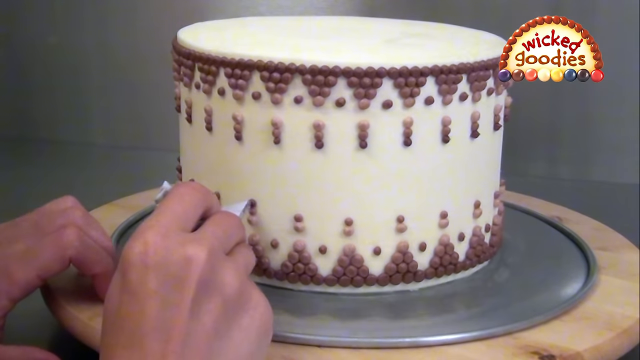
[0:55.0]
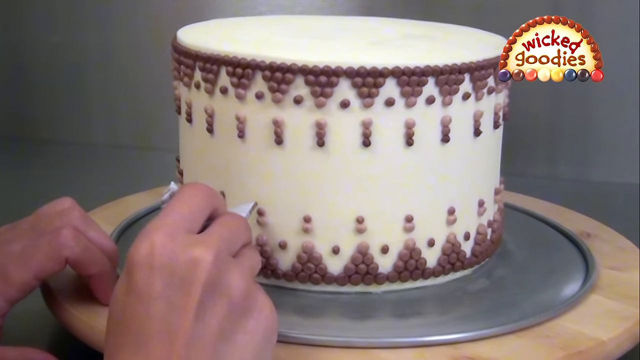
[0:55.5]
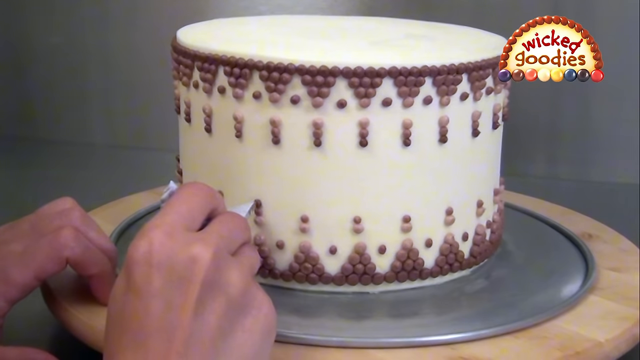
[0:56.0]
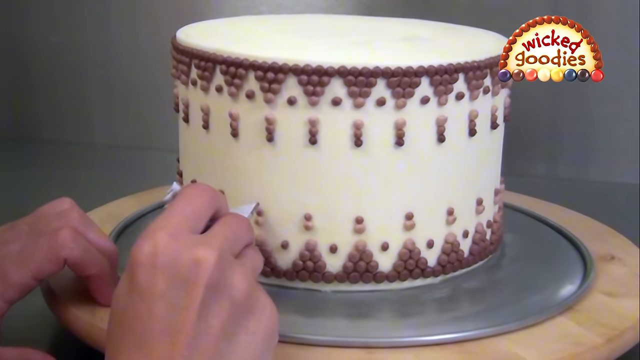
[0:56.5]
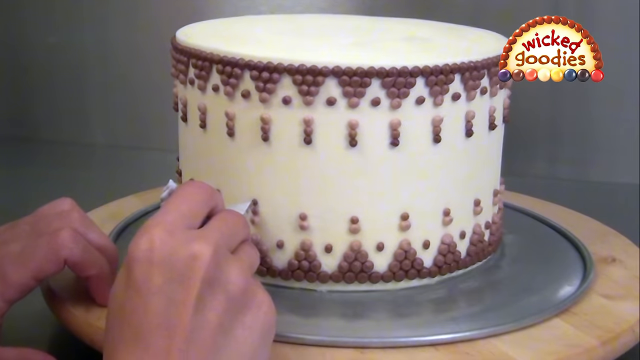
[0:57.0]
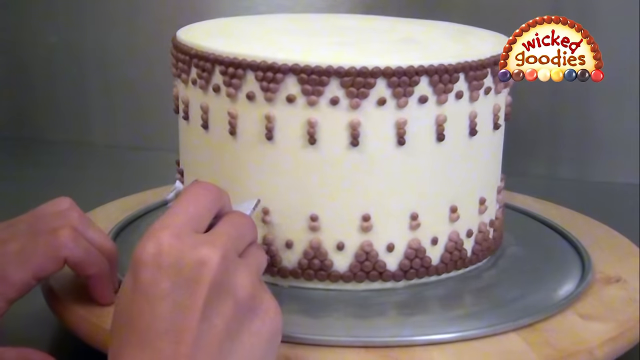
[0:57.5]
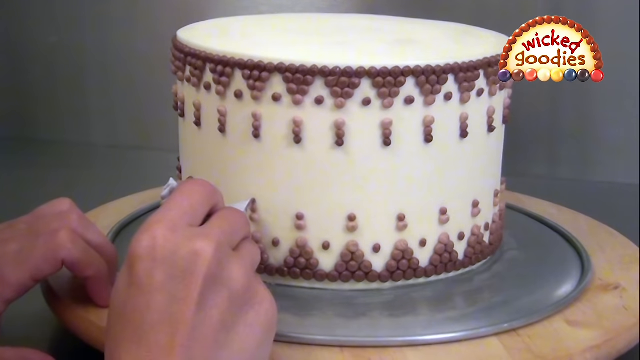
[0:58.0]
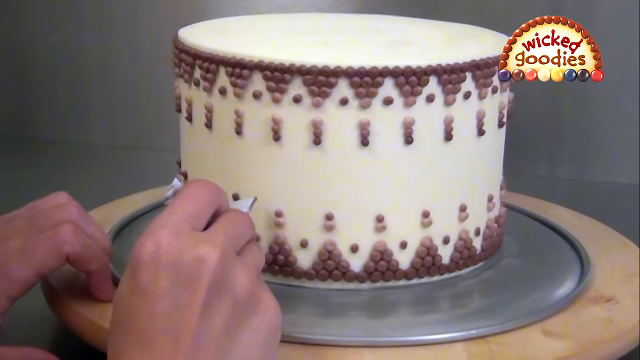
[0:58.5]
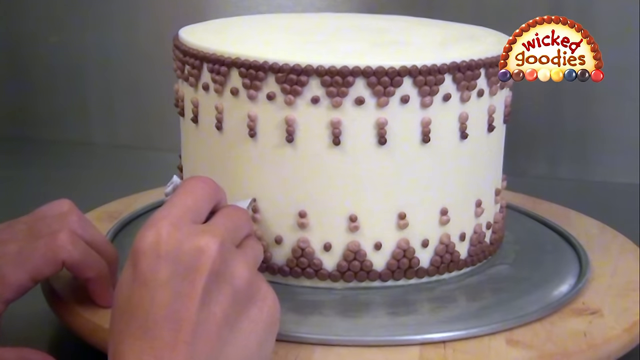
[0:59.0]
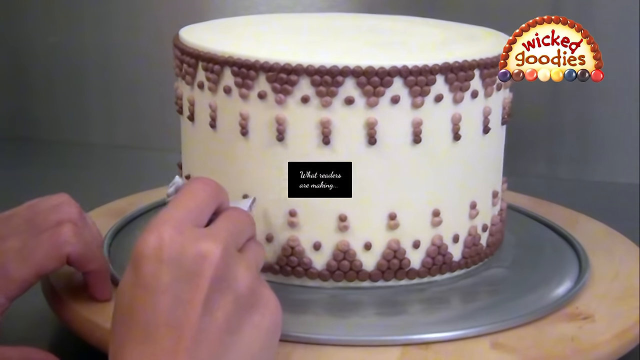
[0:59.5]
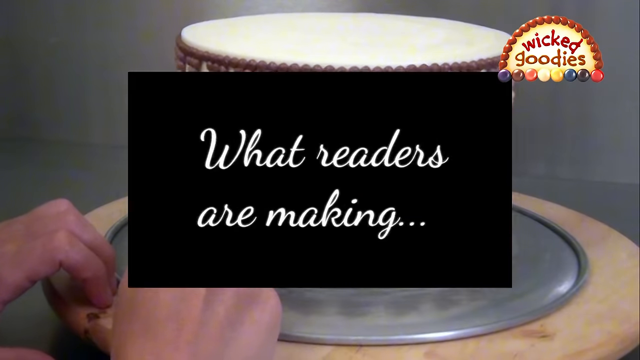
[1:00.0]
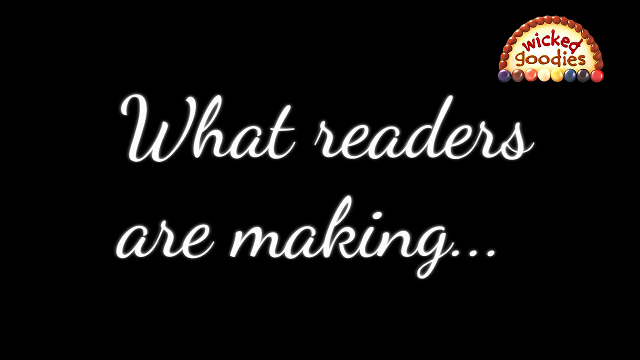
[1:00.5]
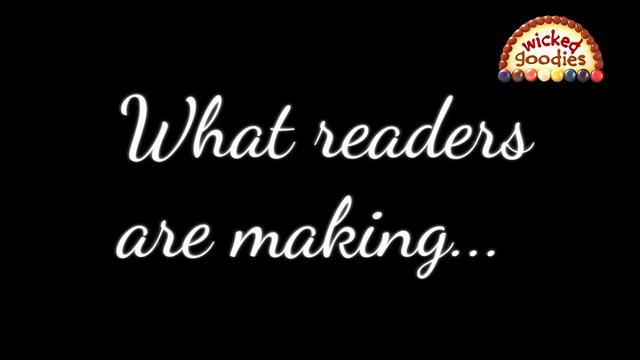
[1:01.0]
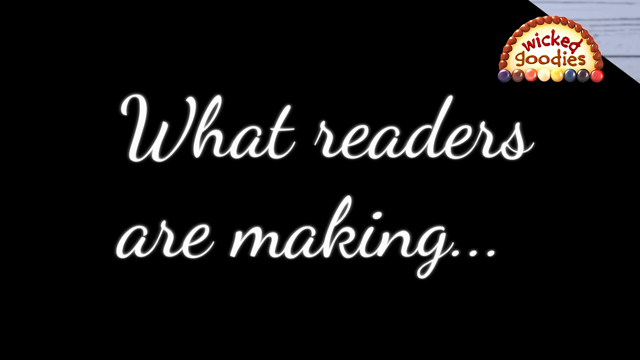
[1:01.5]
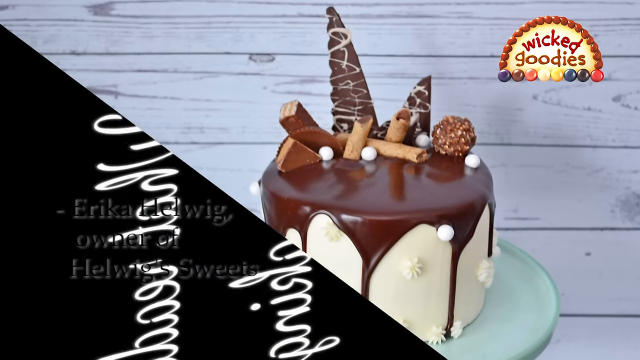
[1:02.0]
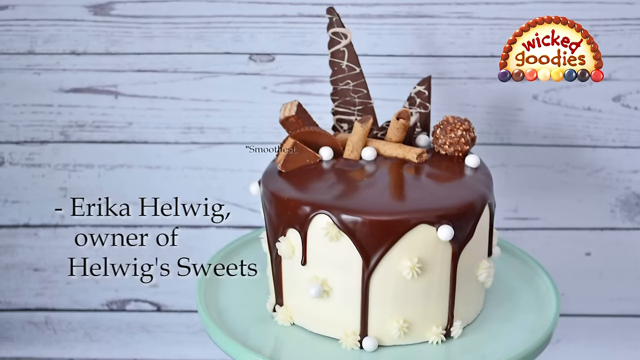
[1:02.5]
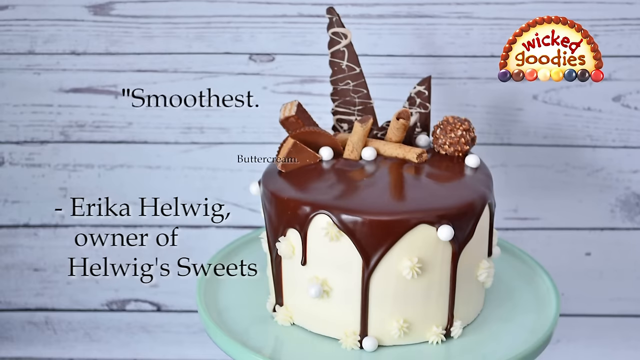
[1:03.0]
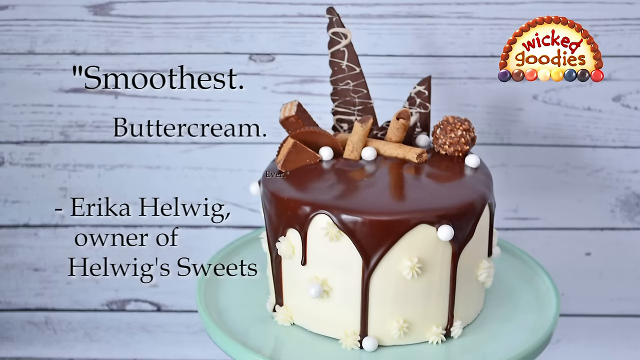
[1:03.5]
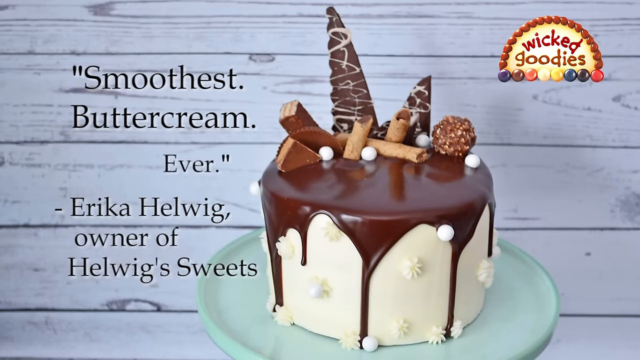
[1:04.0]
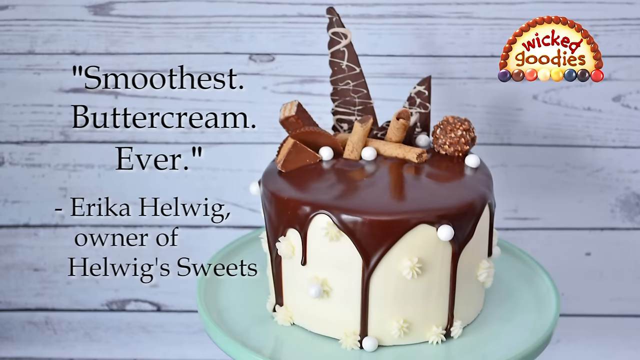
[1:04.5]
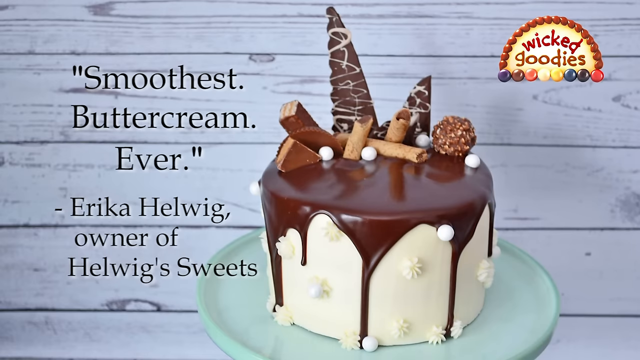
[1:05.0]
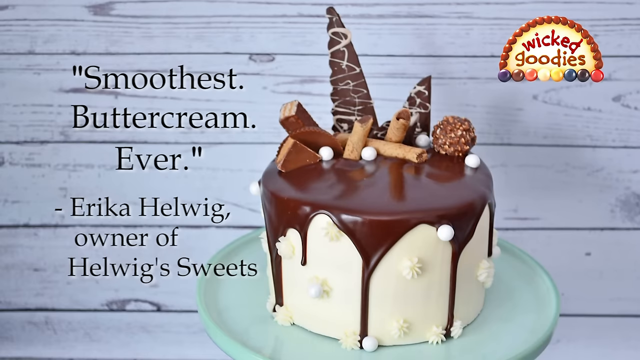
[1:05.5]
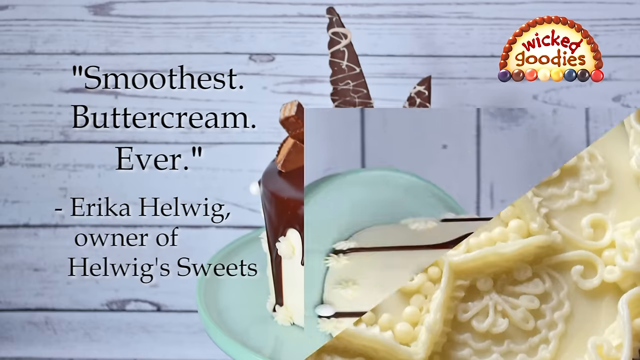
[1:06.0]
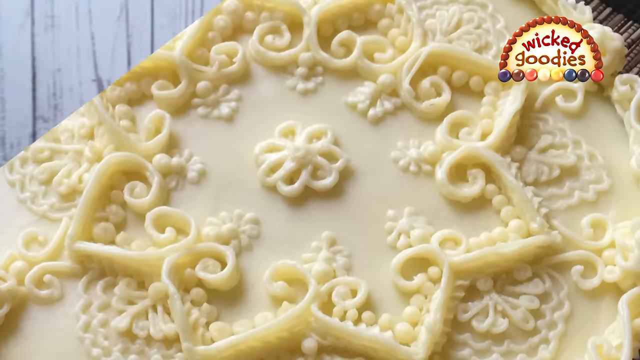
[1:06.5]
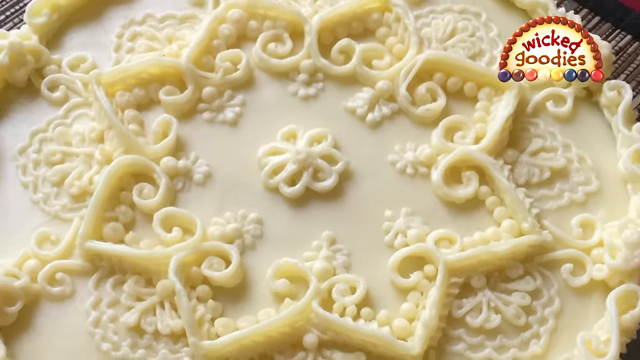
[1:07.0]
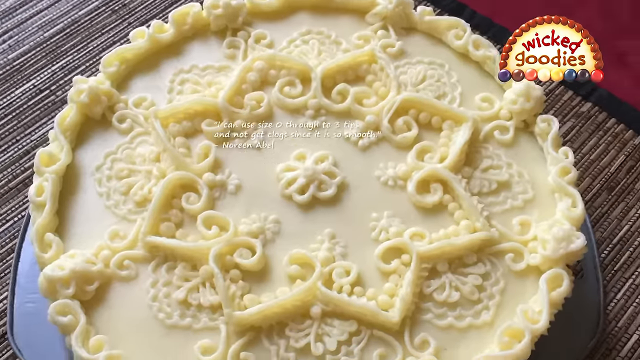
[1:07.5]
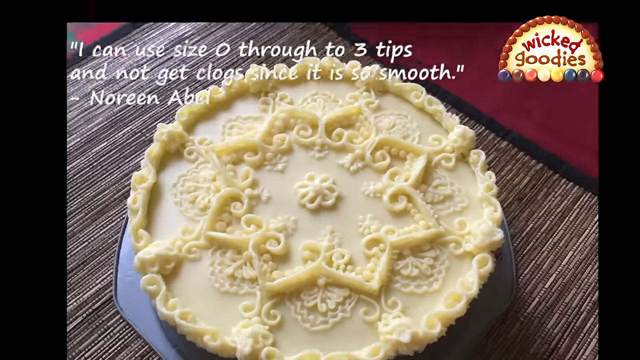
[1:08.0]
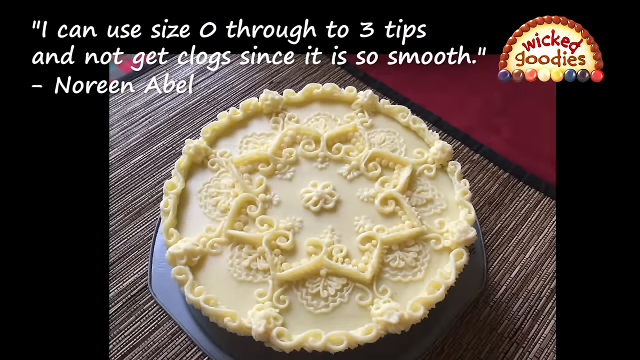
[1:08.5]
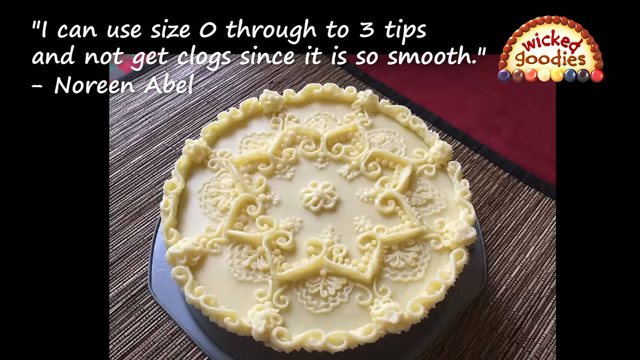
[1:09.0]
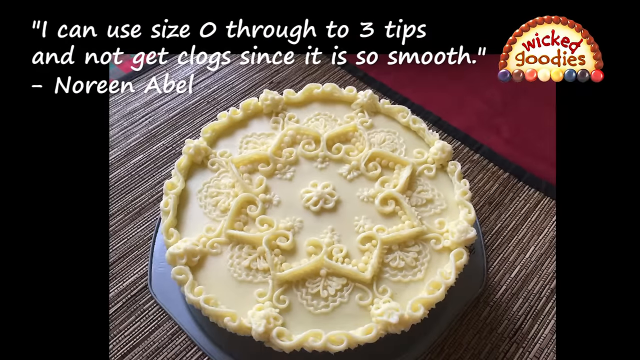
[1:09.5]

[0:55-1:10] A cake that seems to be vanilla, with an unknown filling and smooth white frosting, is being decorated in detail with many very small dots of a maroonish-looking frosting in a pattern, while the decorator turns the wooden device that spins the cake. The screen then shows what readers are making: Erica Helwig, owner of Helwig Sweets, with a white cake on a green plate, chocolate frosting running down it like melted frosting, and different candies on top, from chocolate and vanilla bark to marshmallows to Reese's peanut butter cups. There is what seem to be reviews that say "smoothest buttercream ever." Next, a pale yellow cake with a lot of intricate frosting designs appears, along with text stating that the decorating tips used do not get clogged.